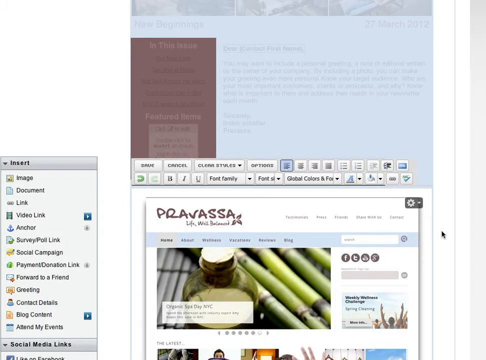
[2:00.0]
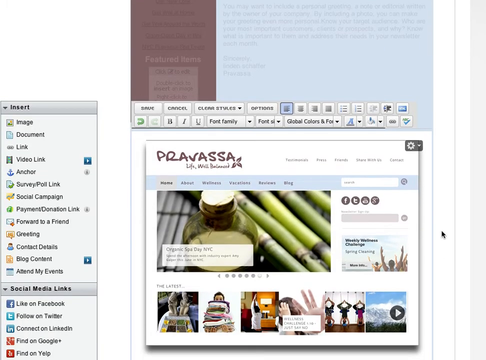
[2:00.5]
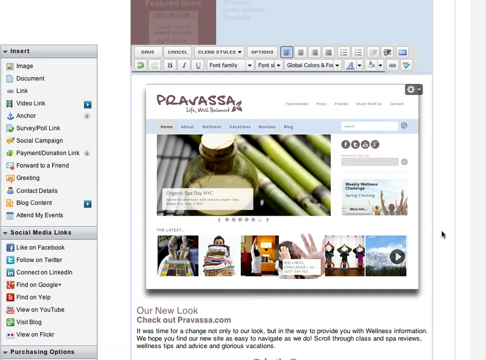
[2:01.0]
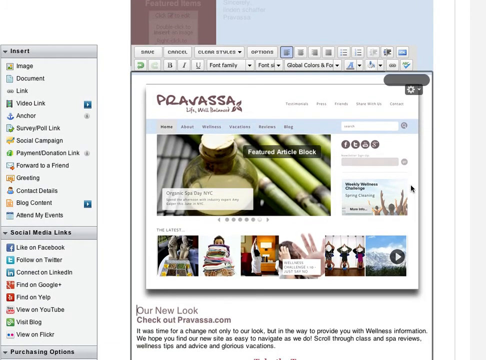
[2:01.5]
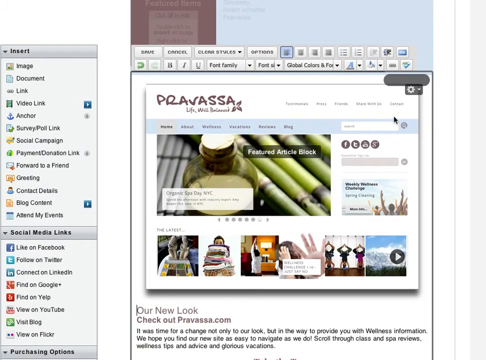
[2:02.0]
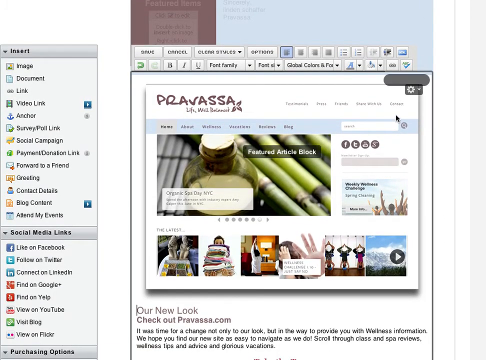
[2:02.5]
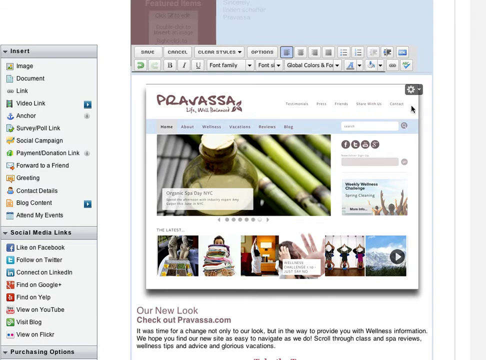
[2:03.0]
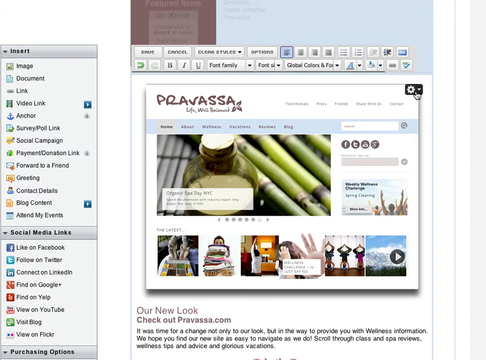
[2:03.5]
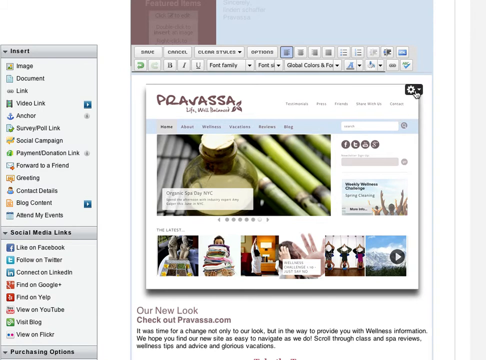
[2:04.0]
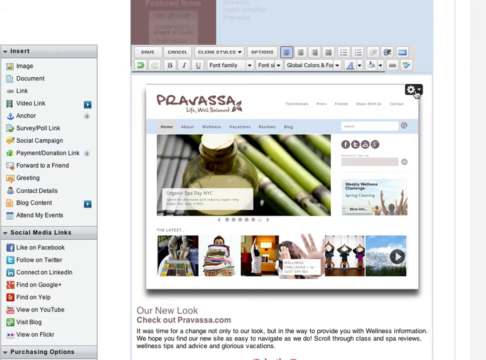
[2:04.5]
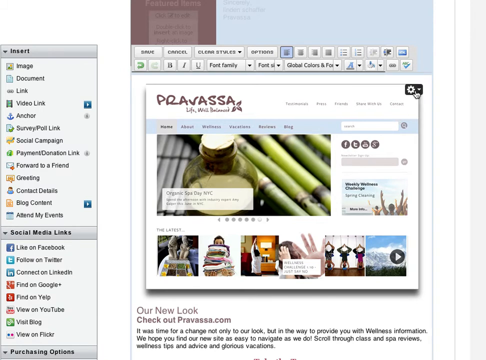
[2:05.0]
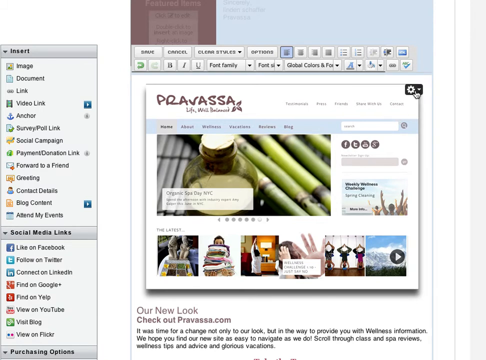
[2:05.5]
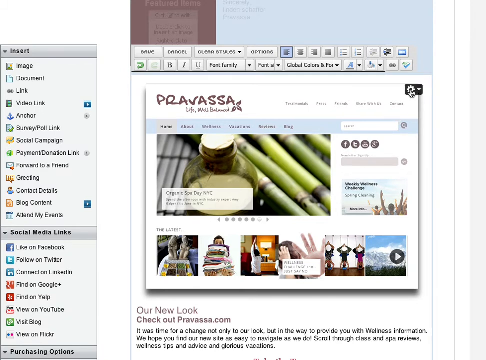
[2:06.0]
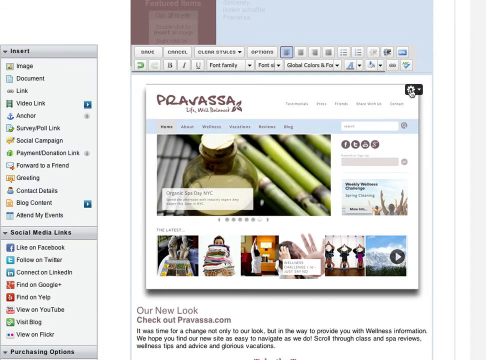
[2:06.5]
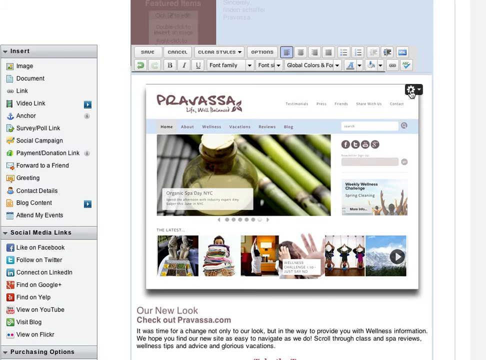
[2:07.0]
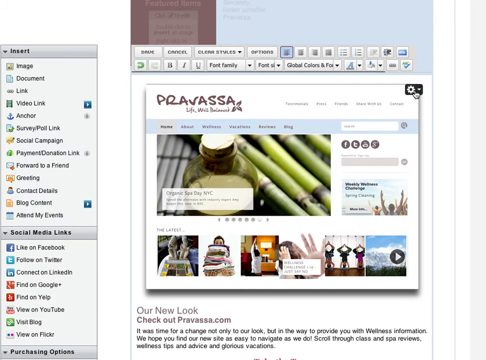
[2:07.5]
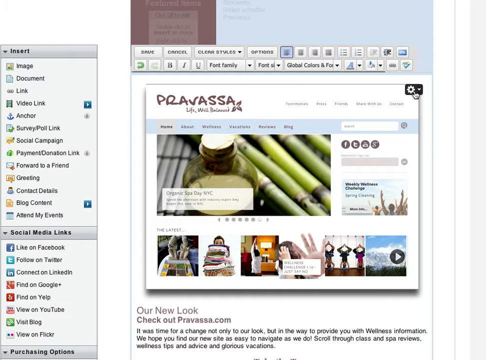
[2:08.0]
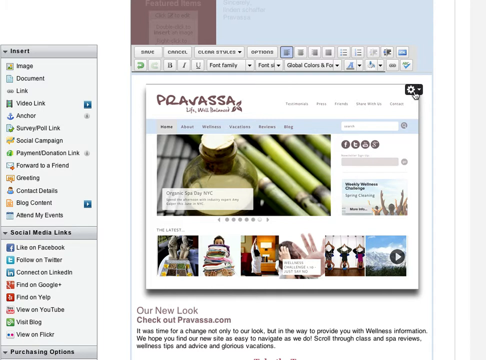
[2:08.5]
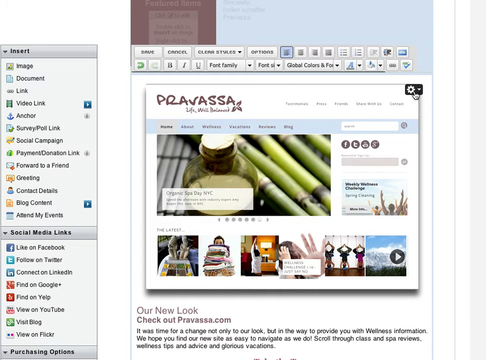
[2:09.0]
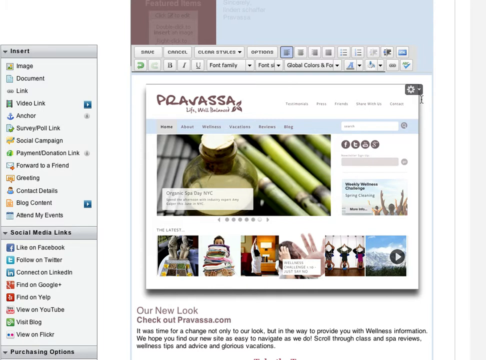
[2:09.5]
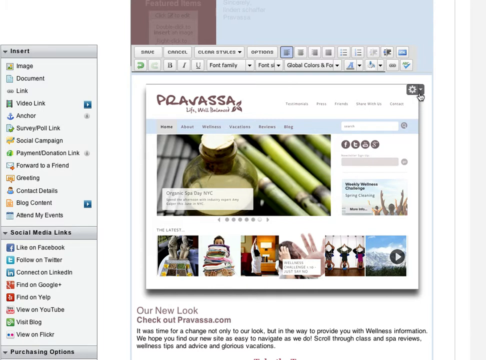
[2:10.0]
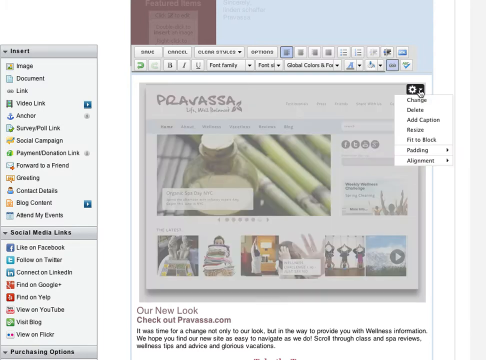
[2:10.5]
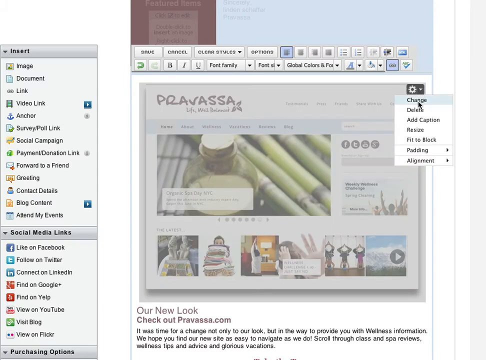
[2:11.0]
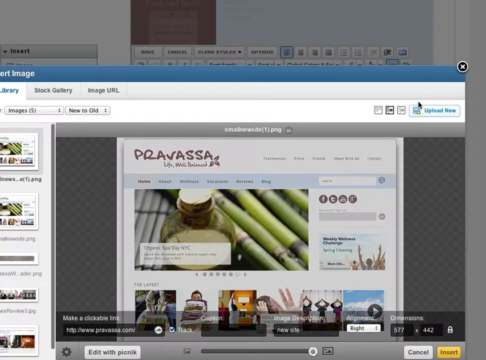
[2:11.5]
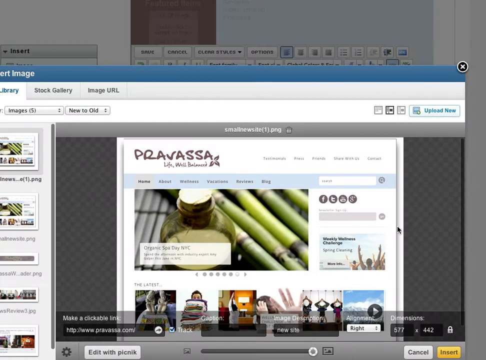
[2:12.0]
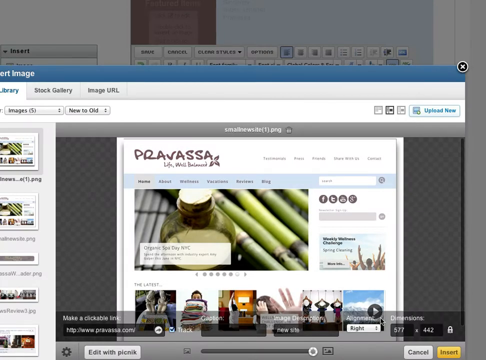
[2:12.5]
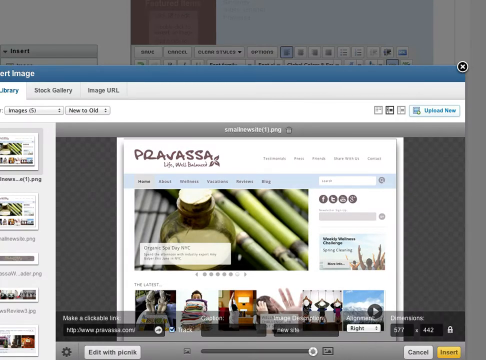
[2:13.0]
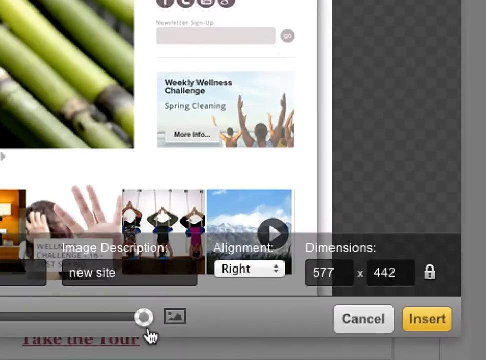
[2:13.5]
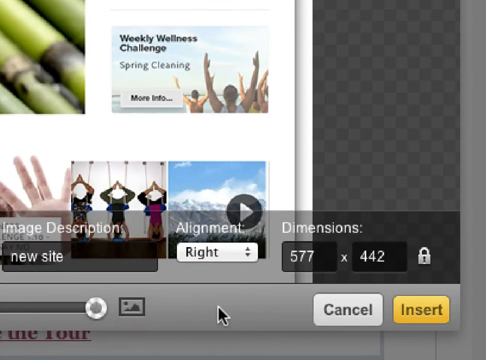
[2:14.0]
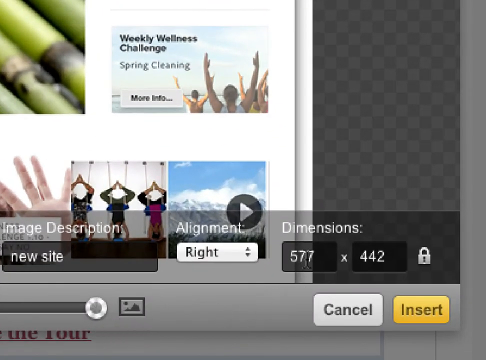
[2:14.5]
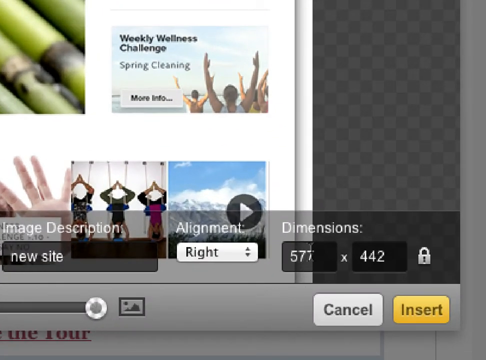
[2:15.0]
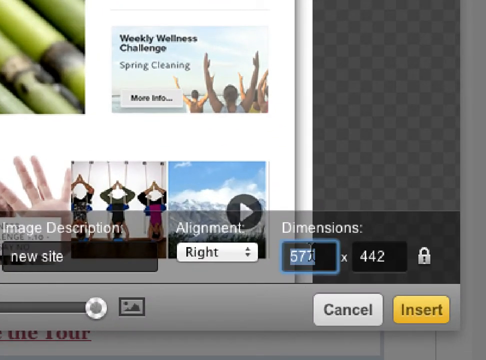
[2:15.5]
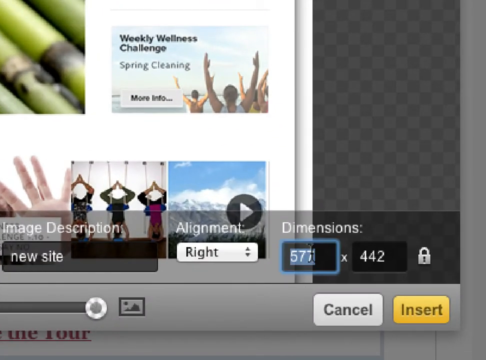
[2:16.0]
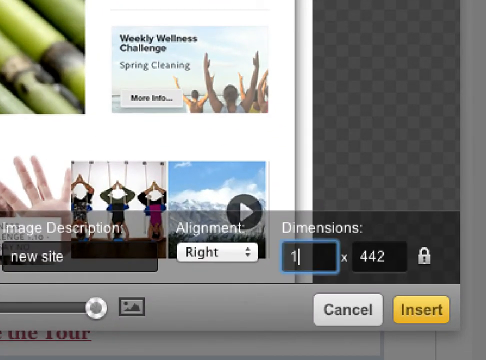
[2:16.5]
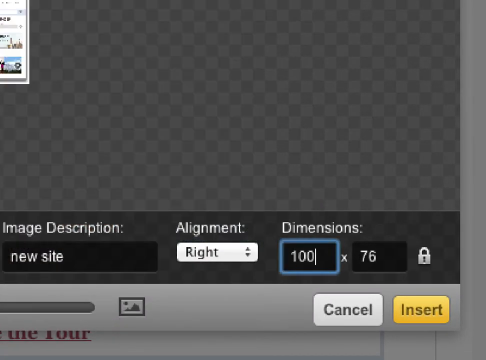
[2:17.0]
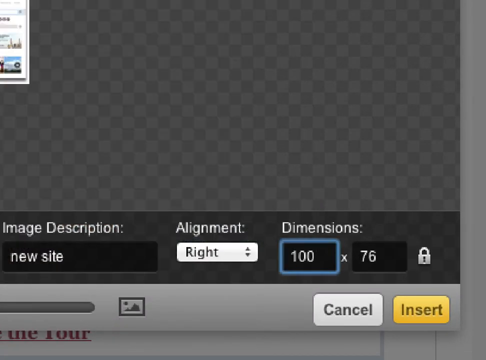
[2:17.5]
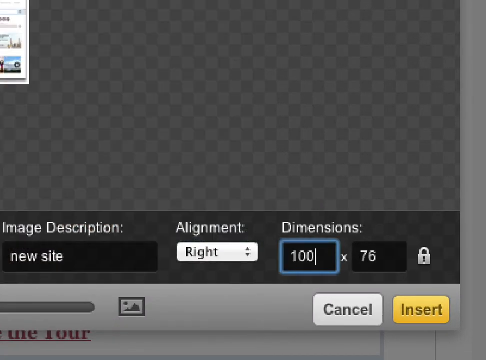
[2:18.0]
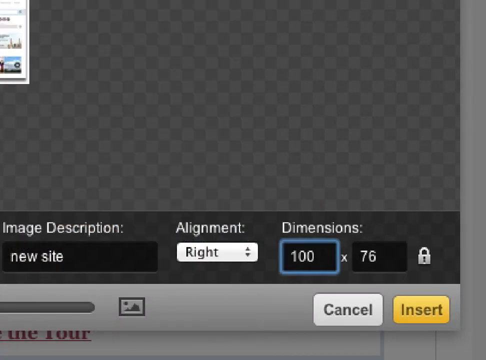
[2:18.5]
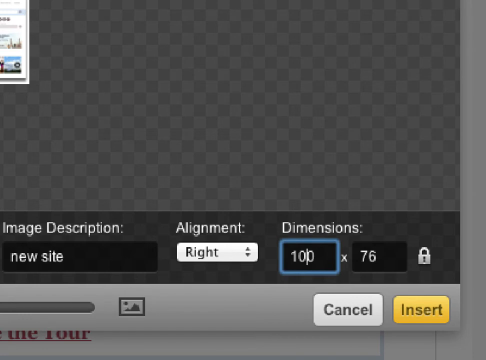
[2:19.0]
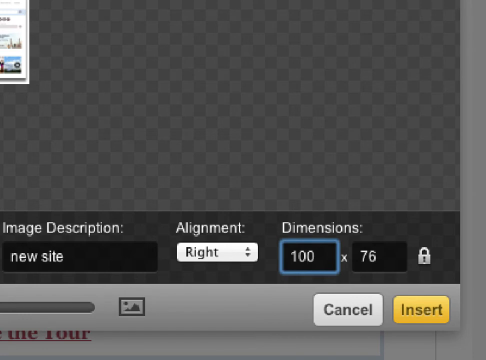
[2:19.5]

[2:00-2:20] The computer screen is scrolled by a pointer shaped like a hand. The pointer scrolls up to the small black box in the top right corner with the gear and points at the gear on the page. At the top are two toolbar lines with multiple icons; the highlighted icon is the one with everything aligned to the left and straight down. The main picture where the hand is shows the Provost sign. The pointer clicks on the drop-down menu where the toolbar and gear are and clicks down to "change". At the very bottom right of the screen, text reads "alignment" set to right and dimensions of 577 times 442, with a lock beside them. Directly under the lock is a yellow box that says "insert", and to its left is a gray box that says "cancel". The first field, with 577, is highlighted by the cursor and changed to 100 times 76. The view then returns to the main screen.